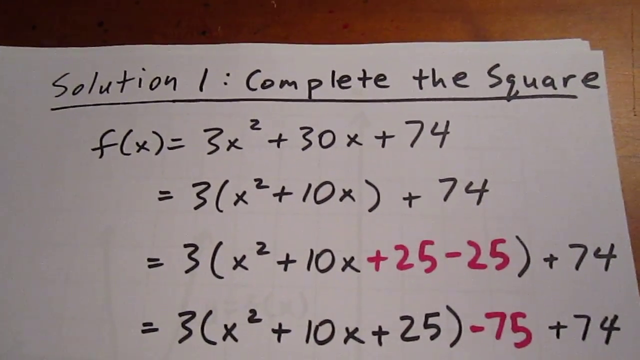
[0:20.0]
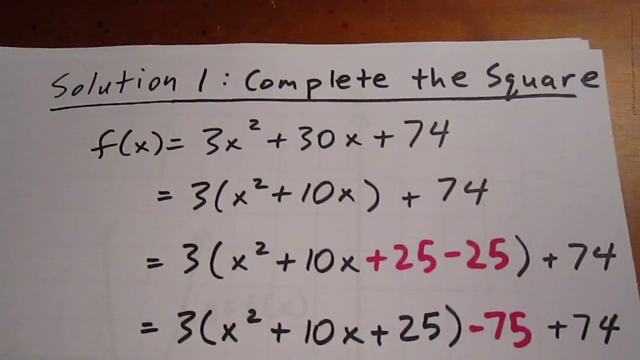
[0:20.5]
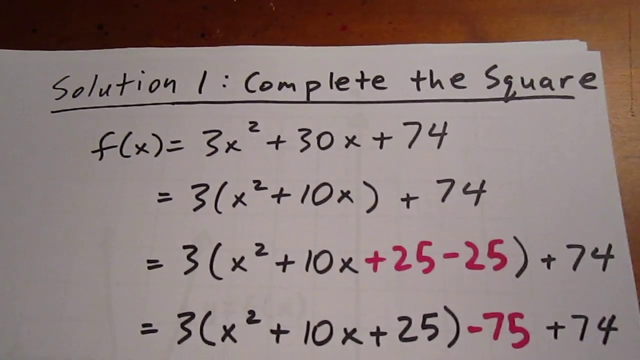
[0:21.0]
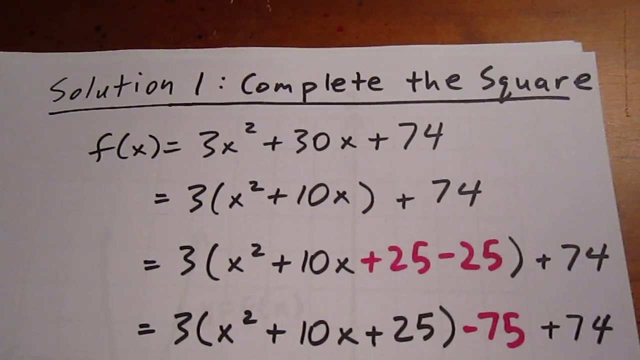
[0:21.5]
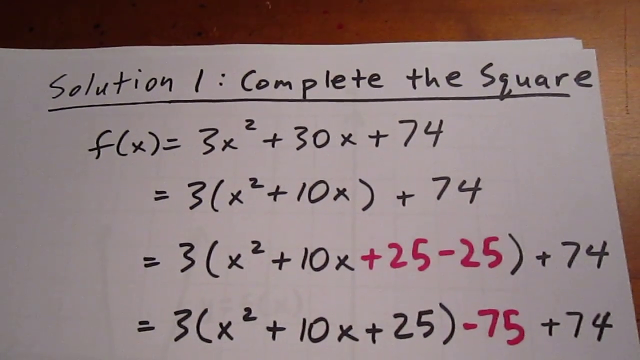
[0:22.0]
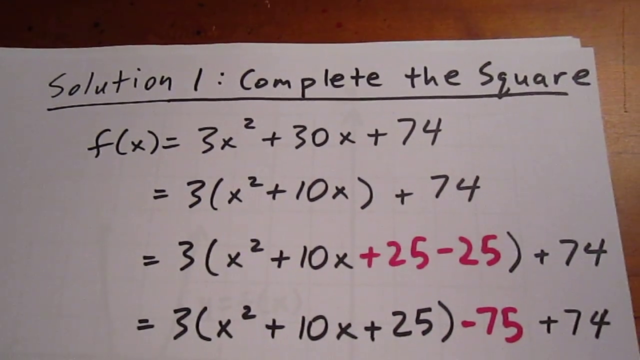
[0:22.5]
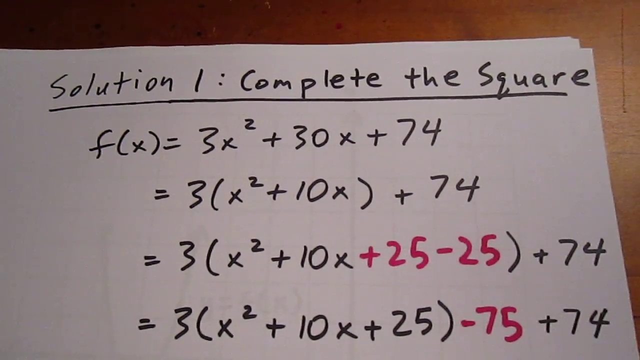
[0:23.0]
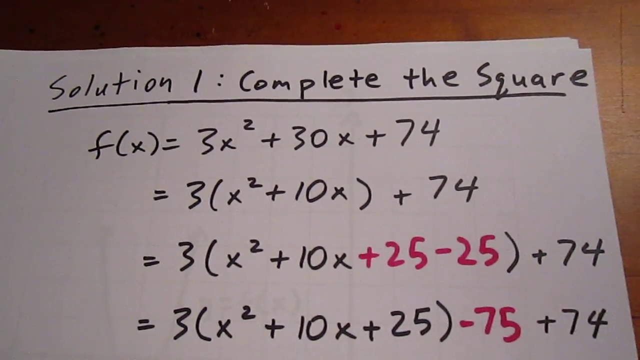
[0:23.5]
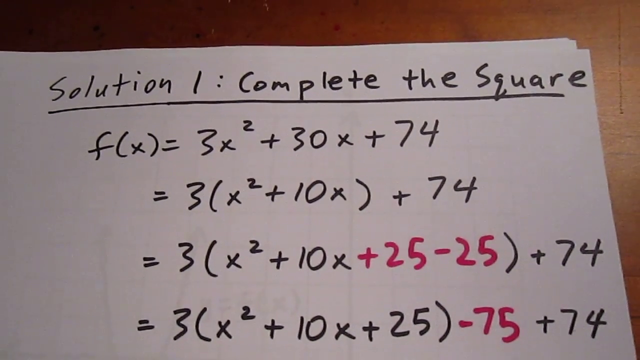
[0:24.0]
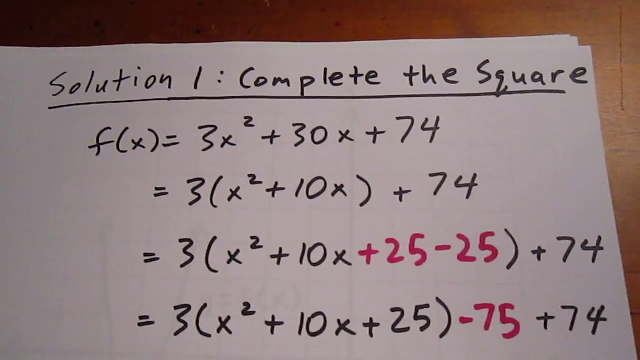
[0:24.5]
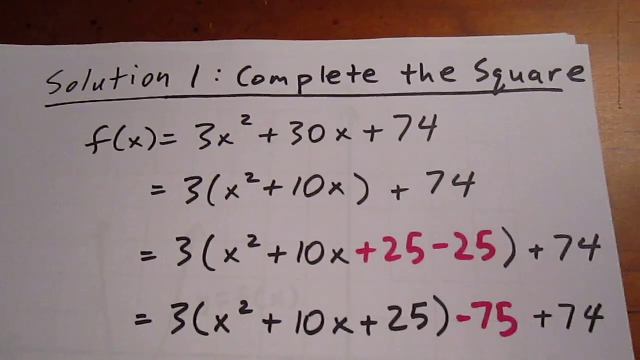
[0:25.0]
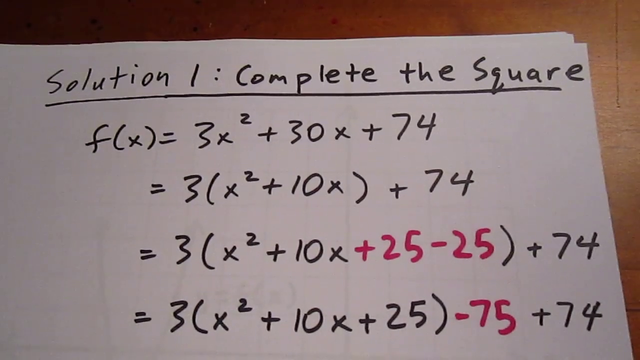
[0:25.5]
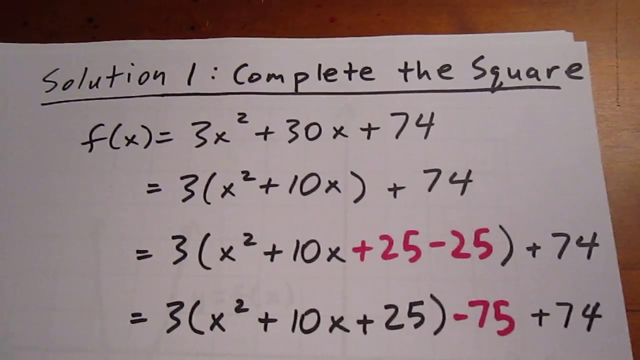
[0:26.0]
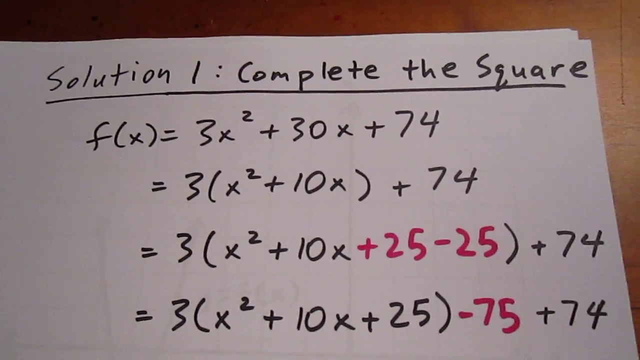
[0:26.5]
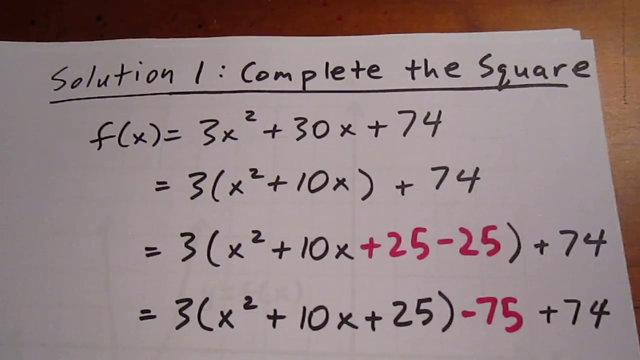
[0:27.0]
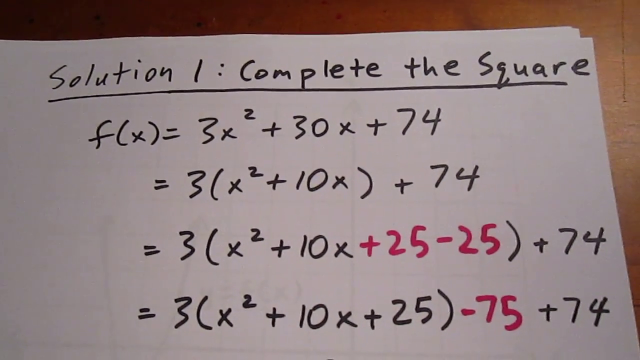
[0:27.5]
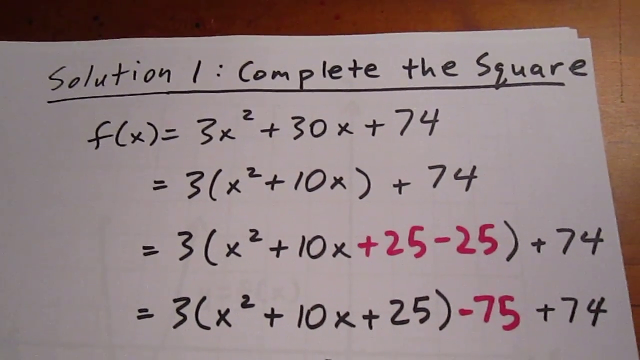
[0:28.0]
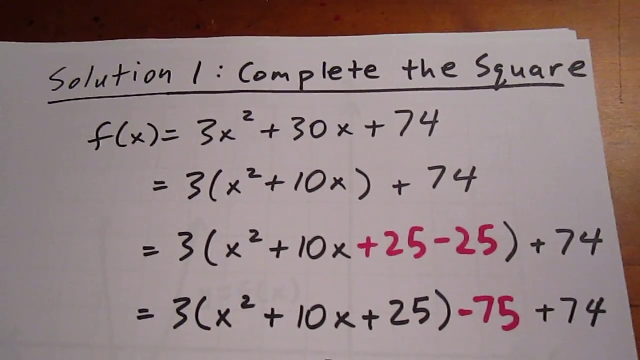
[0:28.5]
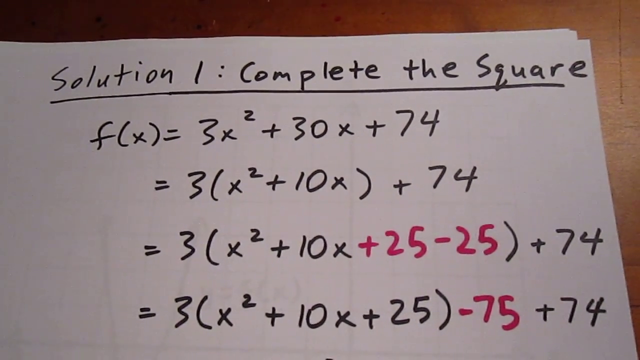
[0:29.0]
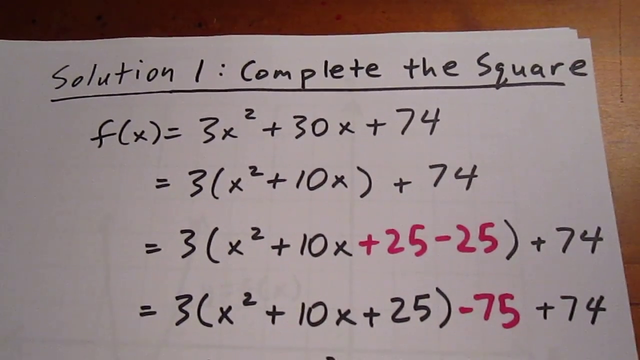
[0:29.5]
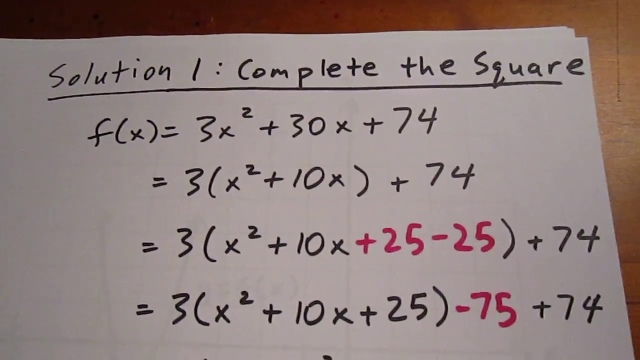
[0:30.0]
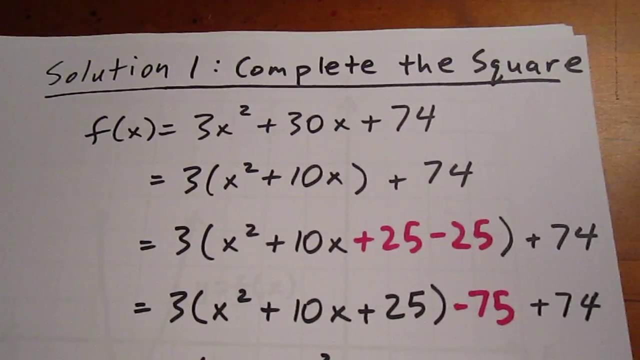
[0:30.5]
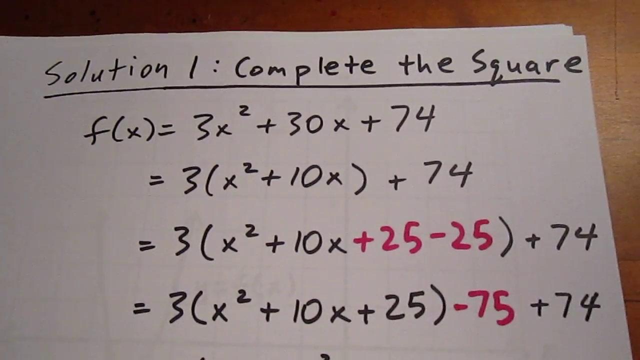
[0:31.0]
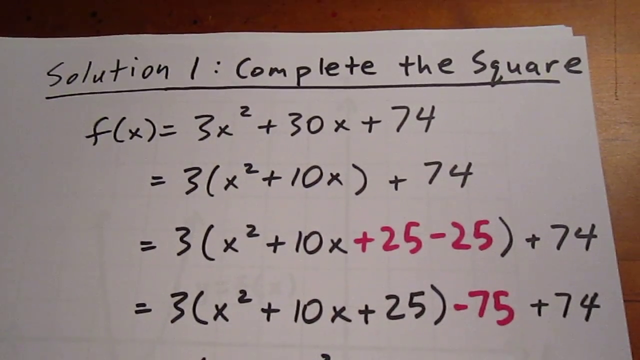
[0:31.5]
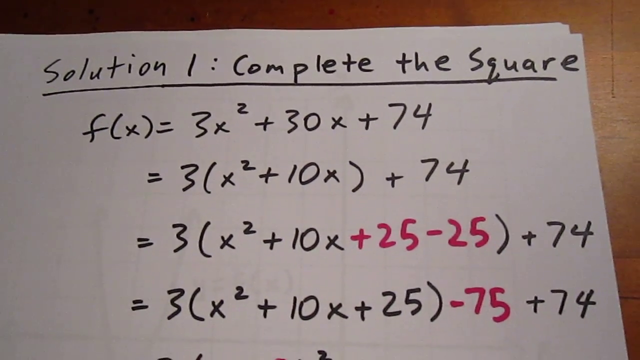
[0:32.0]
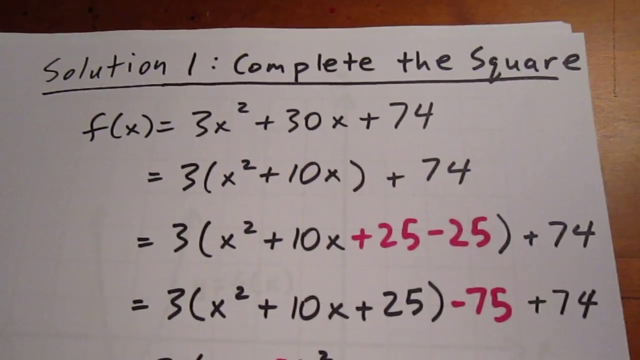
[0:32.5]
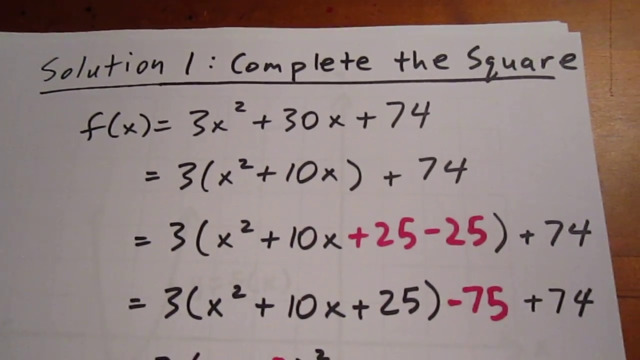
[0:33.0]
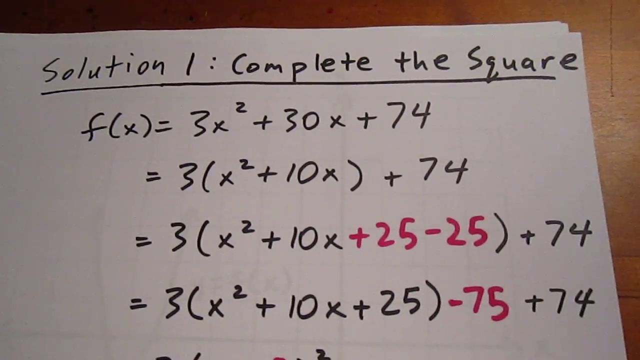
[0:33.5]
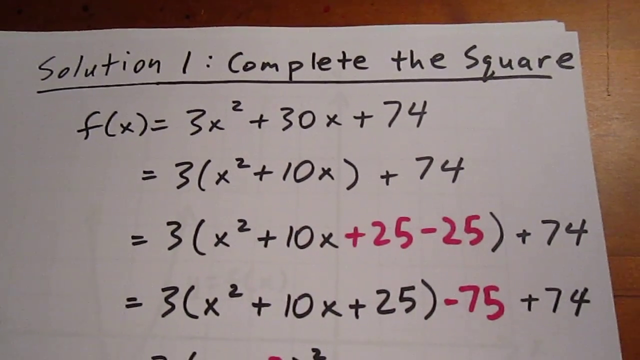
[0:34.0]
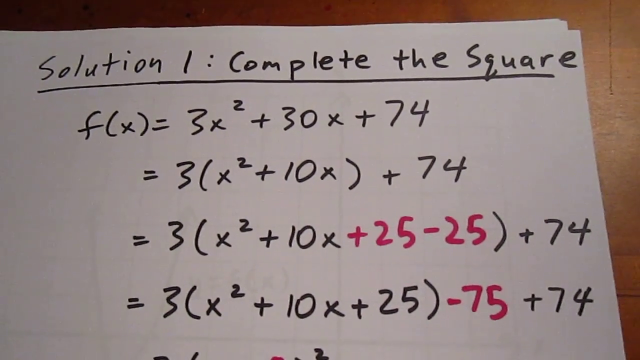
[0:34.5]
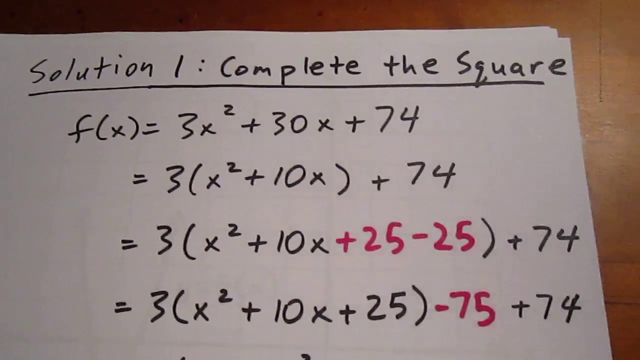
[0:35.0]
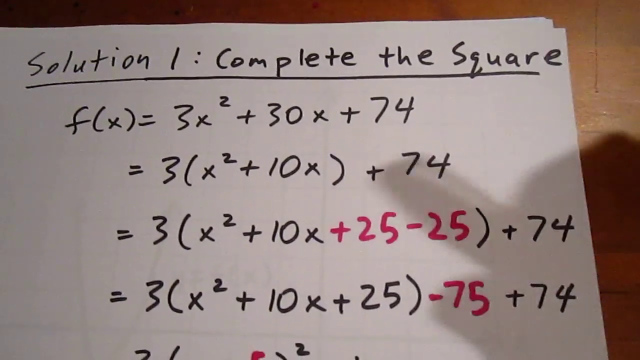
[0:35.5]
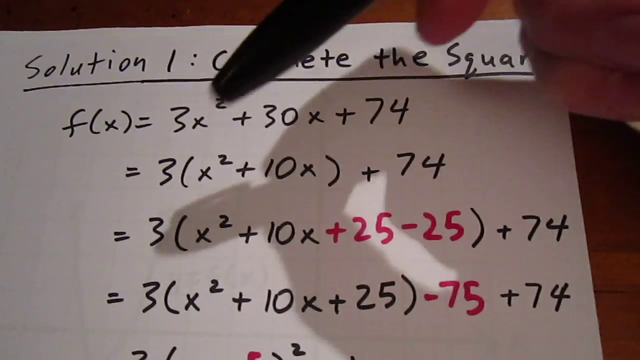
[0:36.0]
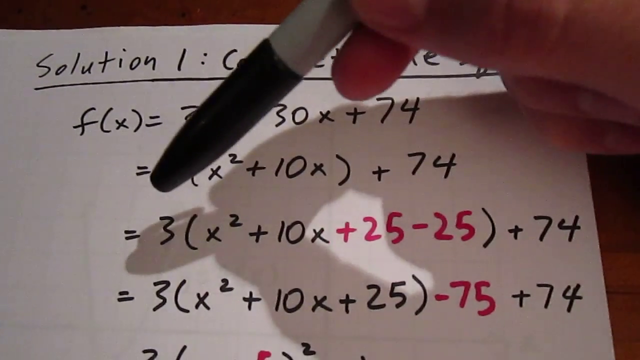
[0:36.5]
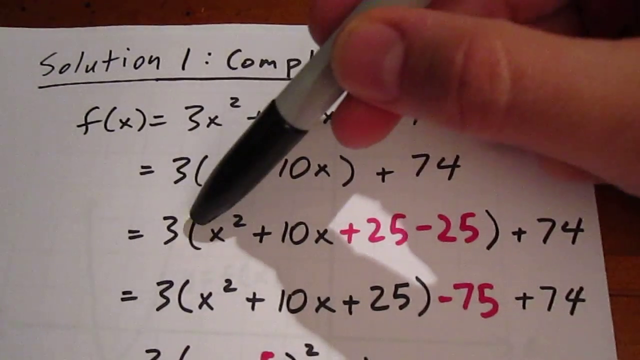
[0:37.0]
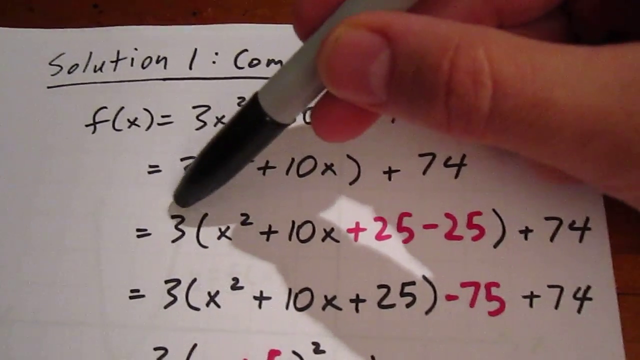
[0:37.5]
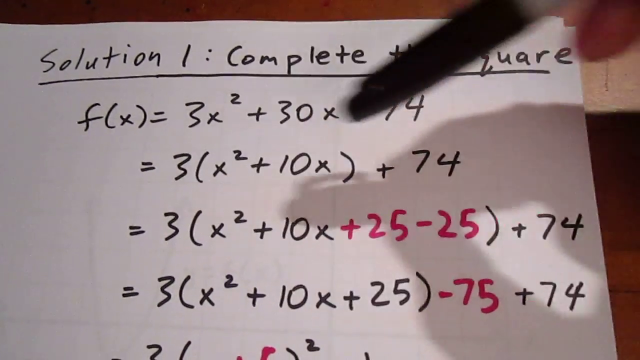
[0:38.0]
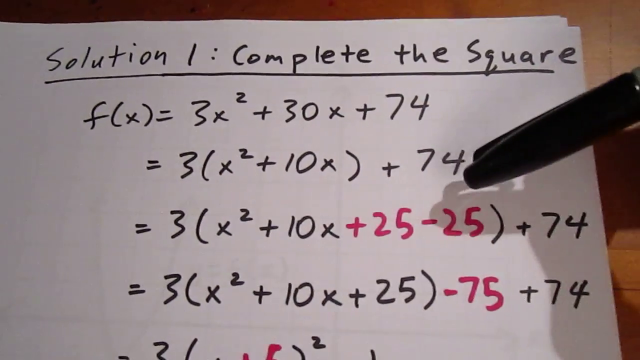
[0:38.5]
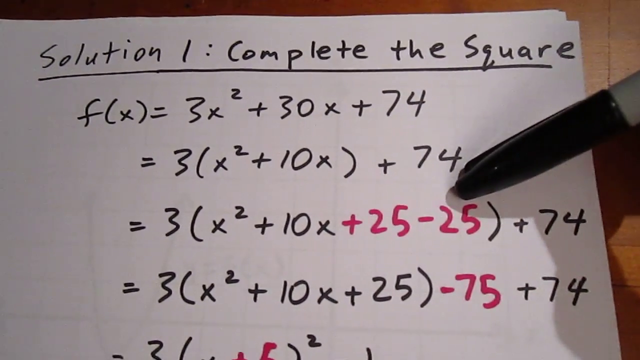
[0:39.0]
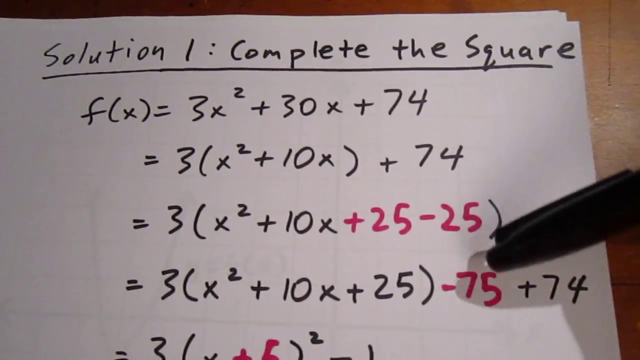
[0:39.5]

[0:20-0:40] Solution one, complete the square, continues on the sheet of paper on the wood desk. The original equation is written as f(x) = 3x² + 30x + 74. The second line is f(x) = 3(x² + 10x) + 74. The third line is 3(x² + 10x + 25 − 25) + 74, with the +25 and −25 written in red. The fourth line is f(x) = 3(x² + 10x + 25) − 75 + 74. An index finger and thumb hold a sharpie with the cap on, pointing to the number 3 in the third line, then to the red 25 and −25, and then moving down to the −75, also in red, in the fourth line.